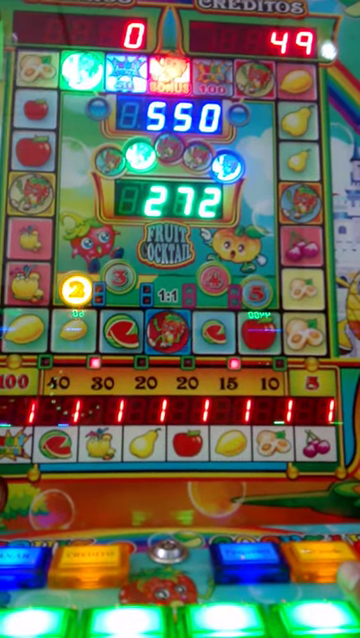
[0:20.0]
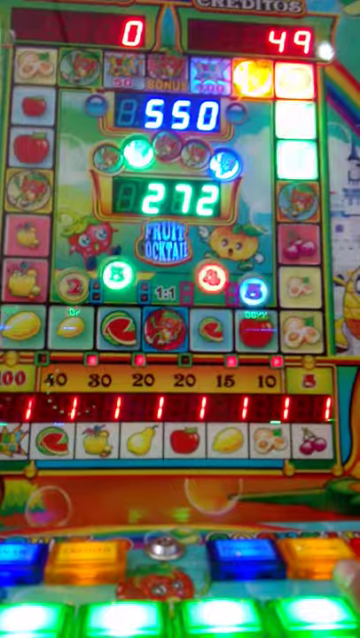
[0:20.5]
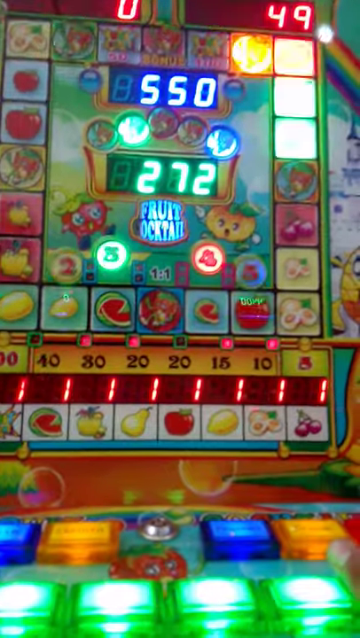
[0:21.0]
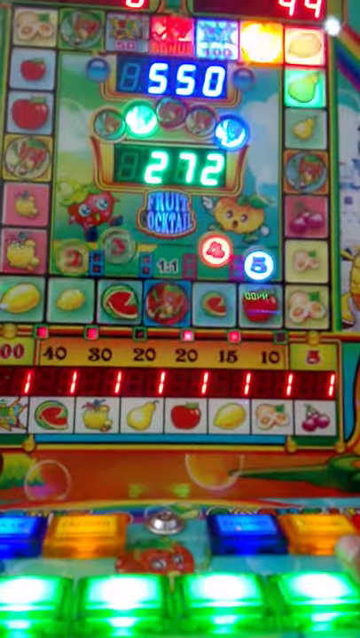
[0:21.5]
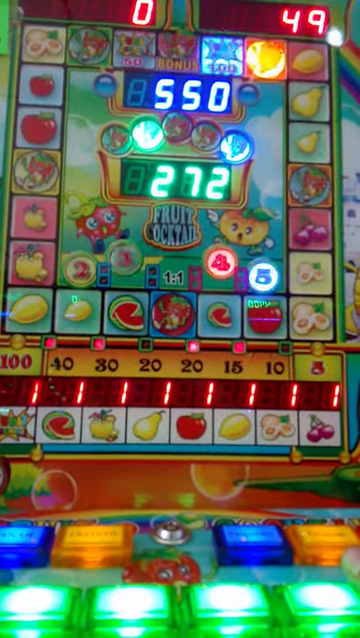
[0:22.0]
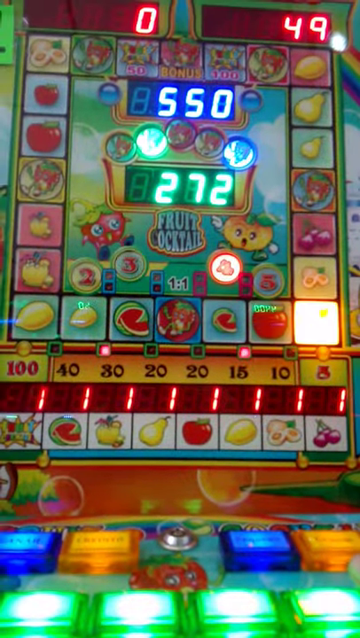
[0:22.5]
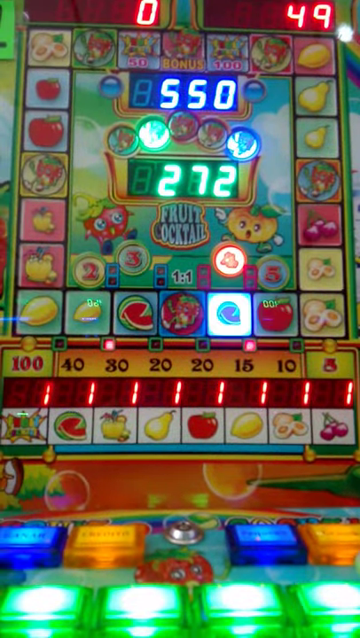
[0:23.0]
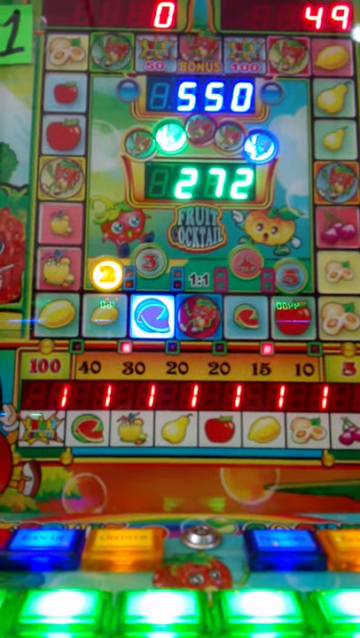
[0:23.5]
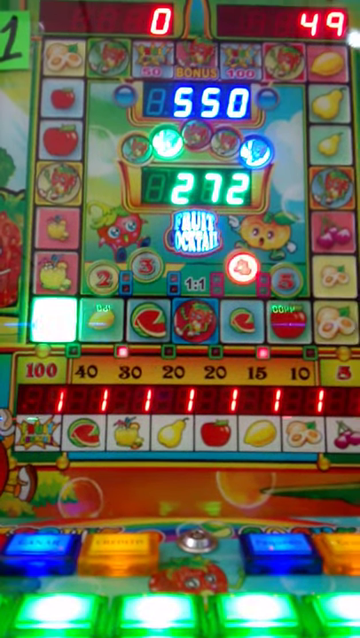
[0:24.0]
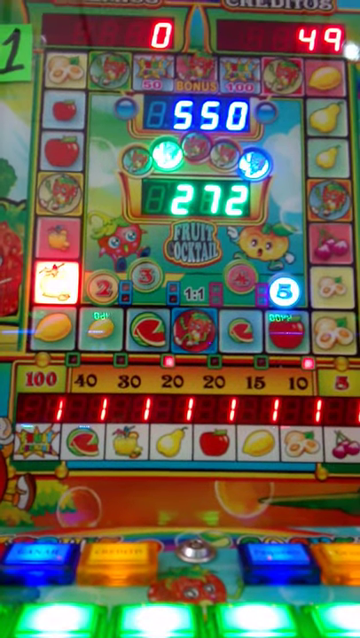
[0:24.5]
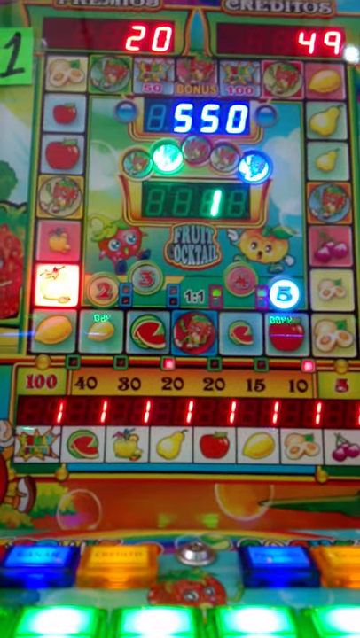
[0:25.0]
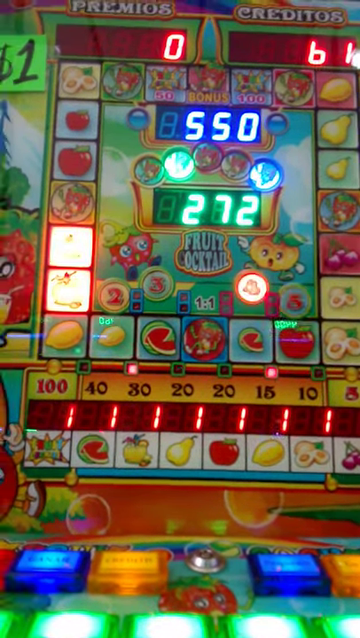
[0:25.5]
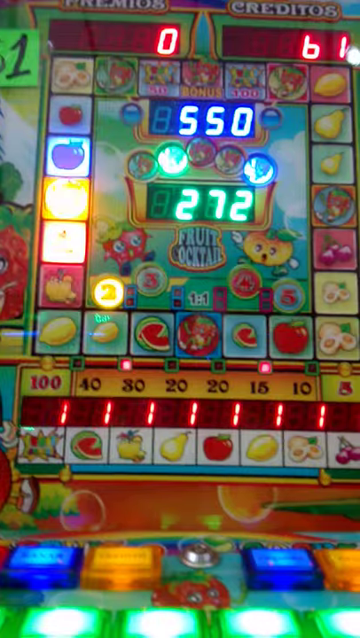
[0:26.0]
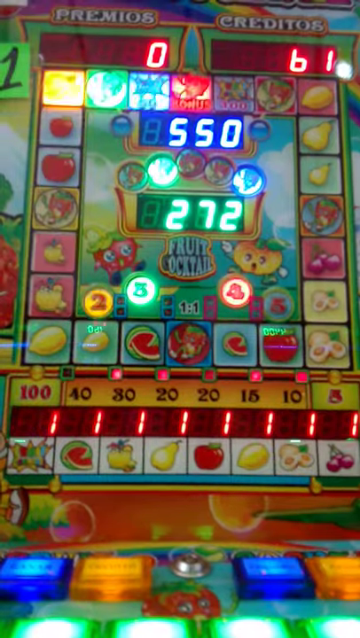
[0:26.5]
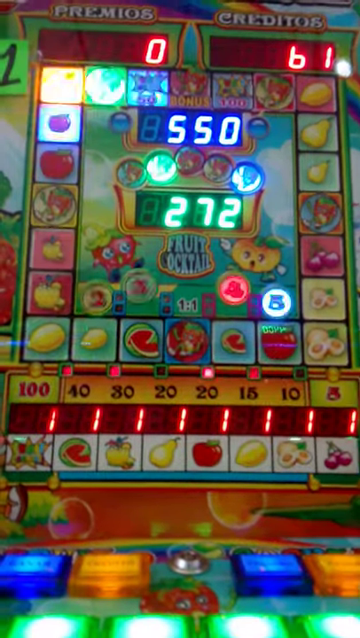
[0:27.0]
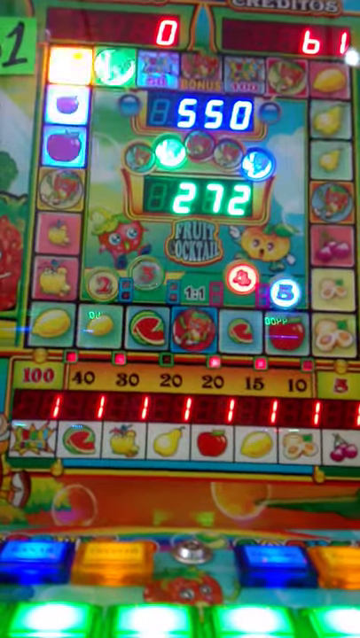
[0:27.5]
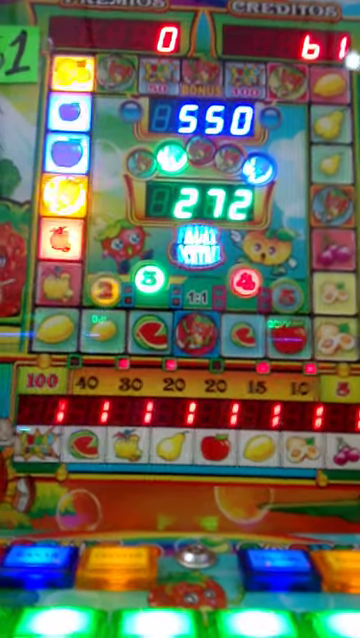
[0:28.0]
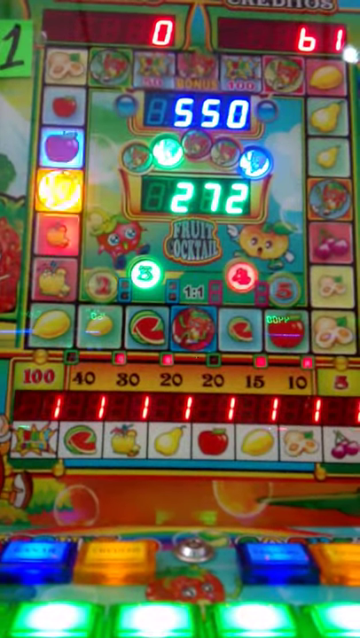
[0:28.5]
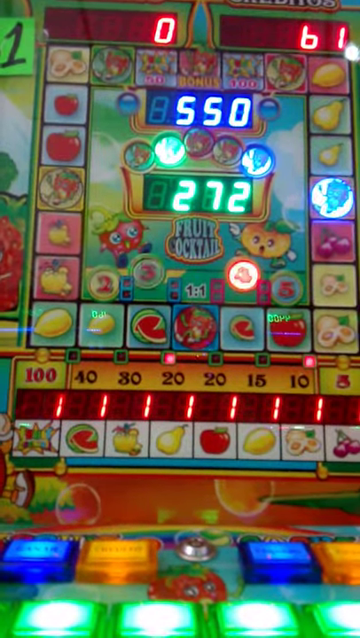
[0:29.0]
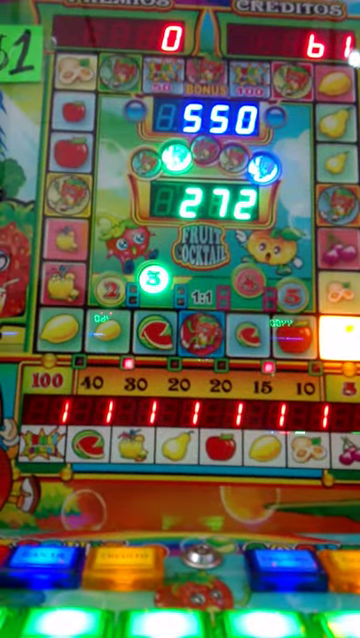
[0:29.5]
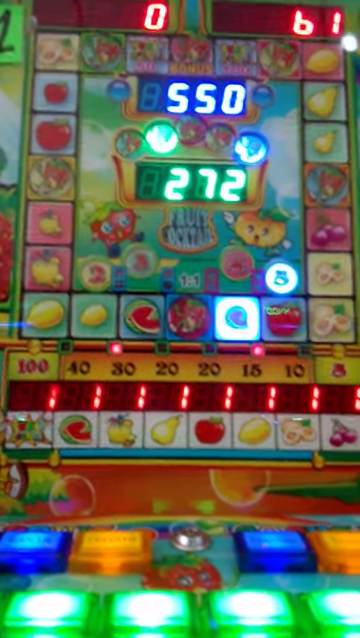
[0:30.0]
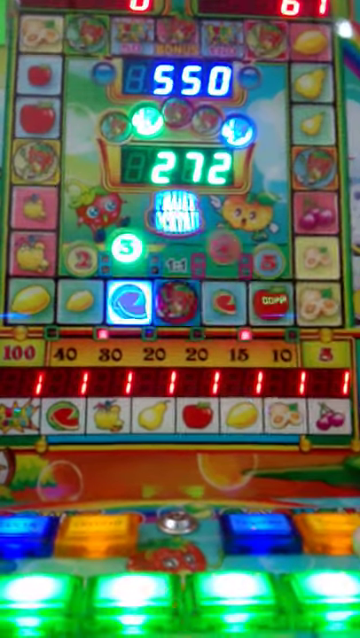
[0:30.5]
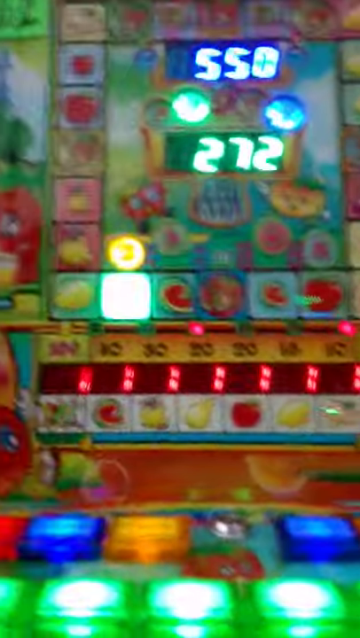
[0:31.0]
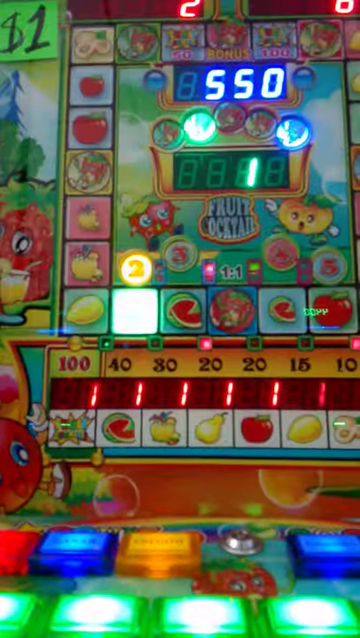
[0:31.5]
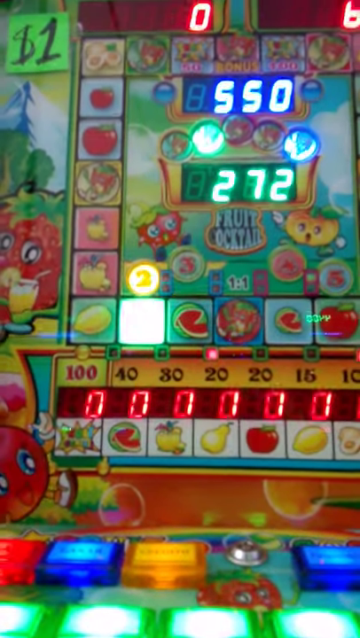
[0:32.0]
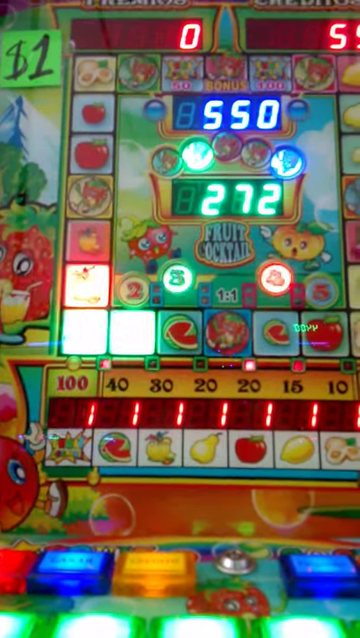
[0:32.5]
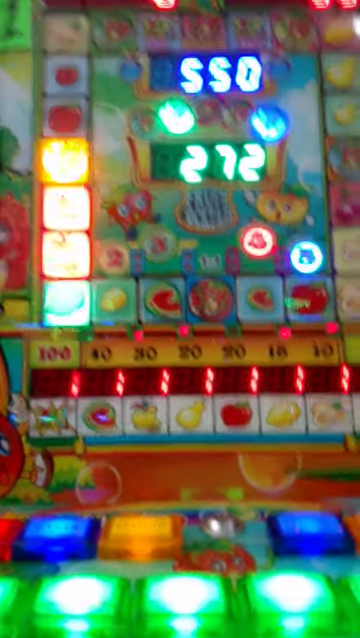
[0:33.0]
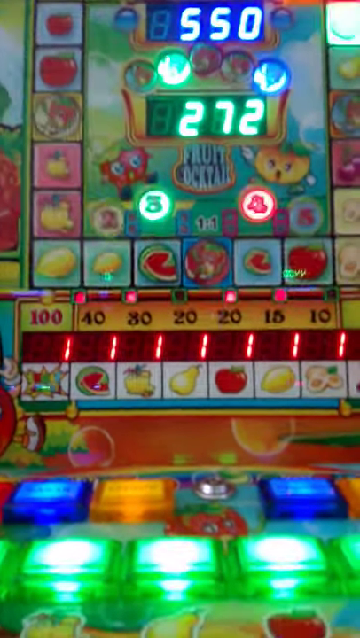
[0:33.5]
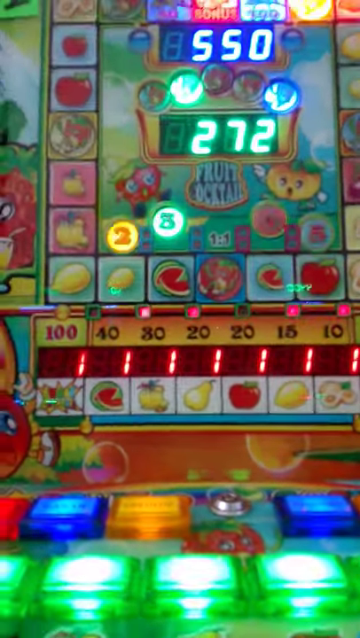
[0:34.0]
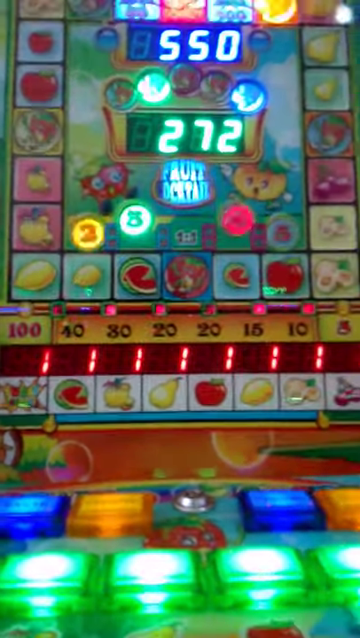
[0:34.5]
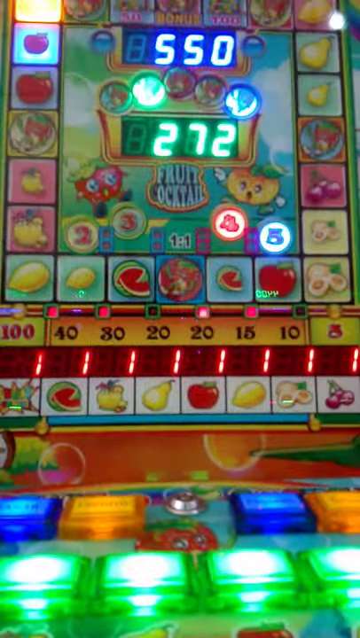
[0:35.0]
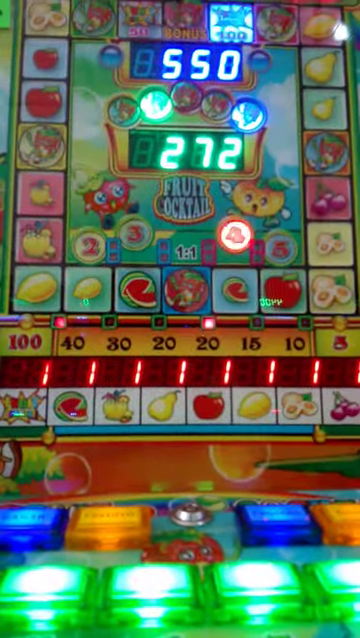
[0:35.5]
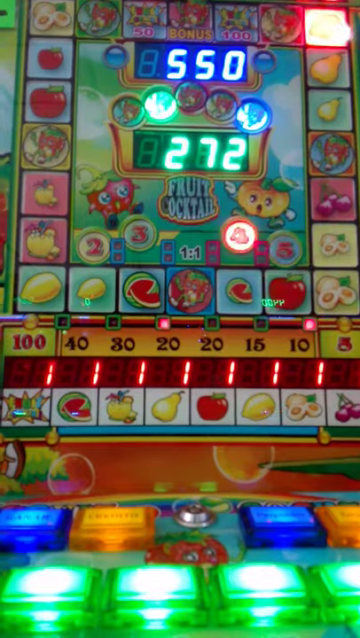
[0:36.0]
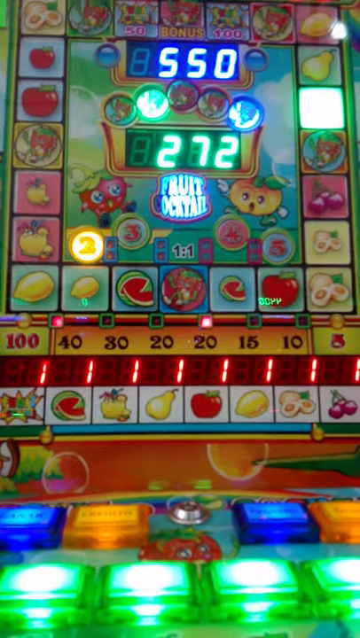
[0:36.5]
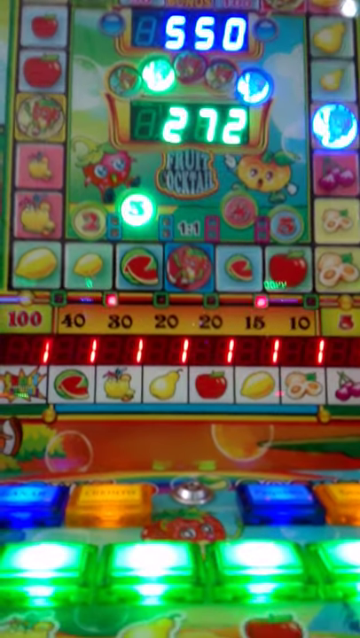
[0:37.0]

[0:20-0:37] The light continues to spin around the square board, which is covered with various types of fruit, while the bonus numbers in the middle flicker on and off. The light slows down near the bottom and eventually stops on a large circular yellow fruit, kind of blinking on it a few times. The light also lands on a bonus multiplier of five. Landing on the fruit seems to have given the player 20 more credits to play with, as "20" appears on the top screen that measures how much is spent and how much is left. The light then spins rapidly around the board as all the bonus levels flash brightly and rapidly. Once it reaches the bottom it slows down again and stops on a small lemon, kind of blinking on it a few times, along with a bonus number of two. The light then continues around the board for another round.